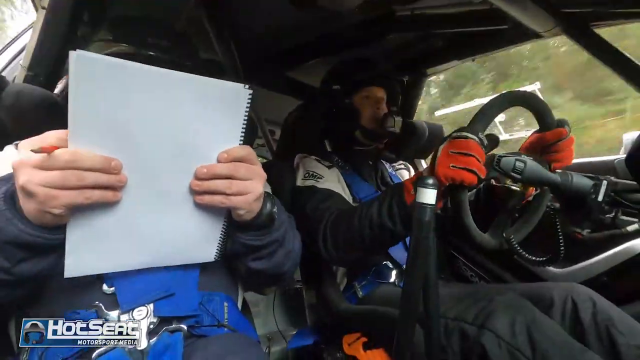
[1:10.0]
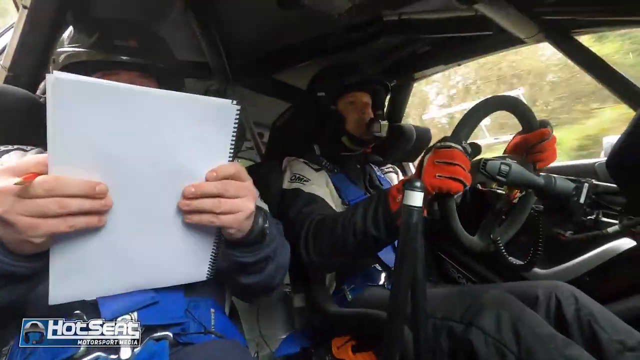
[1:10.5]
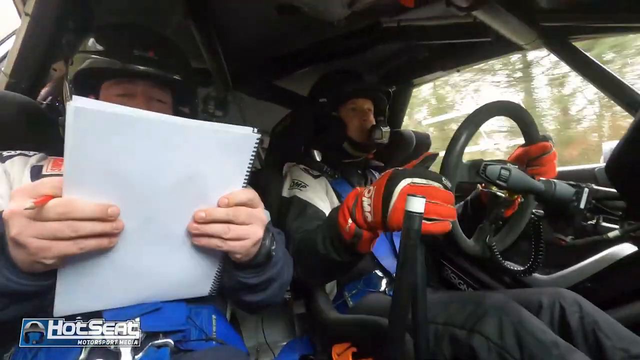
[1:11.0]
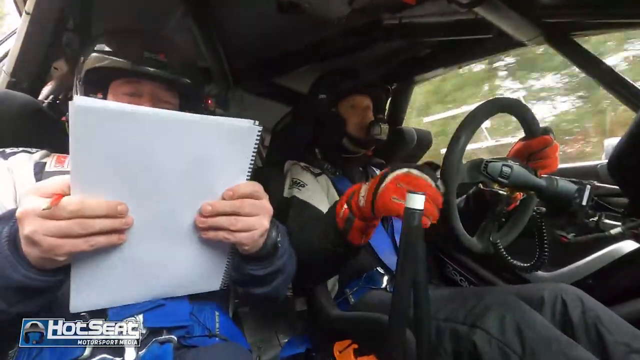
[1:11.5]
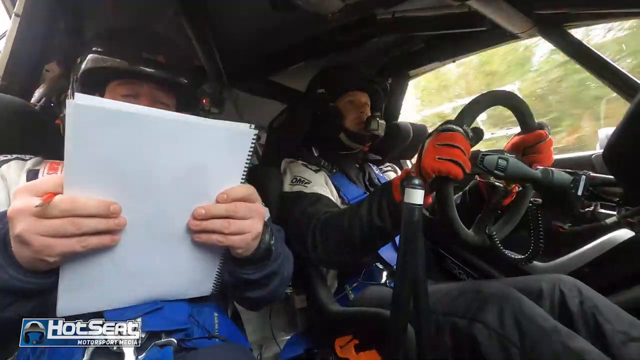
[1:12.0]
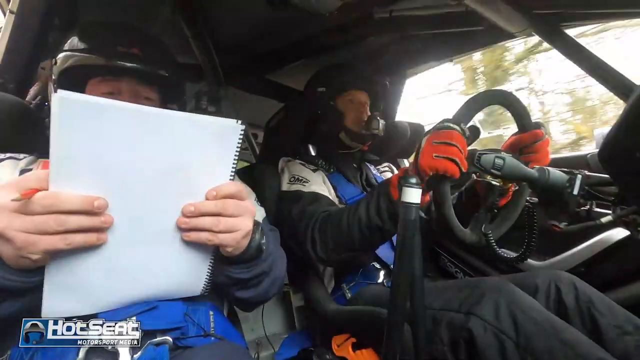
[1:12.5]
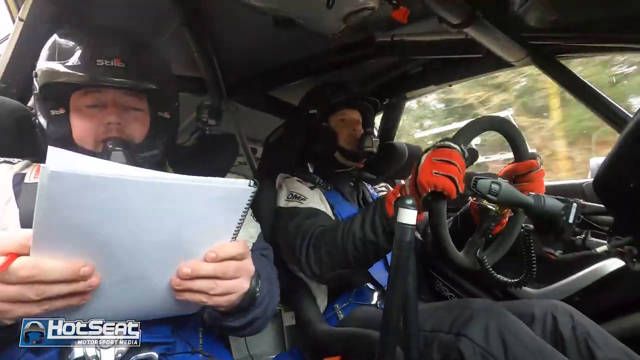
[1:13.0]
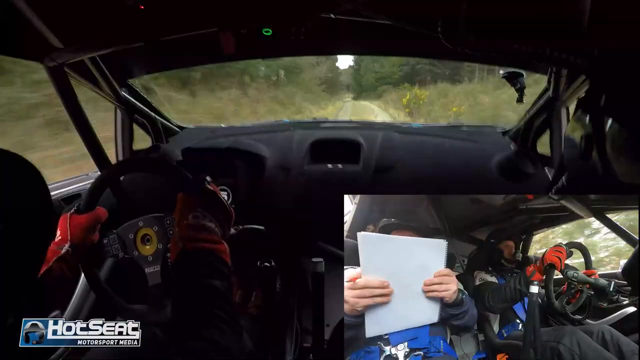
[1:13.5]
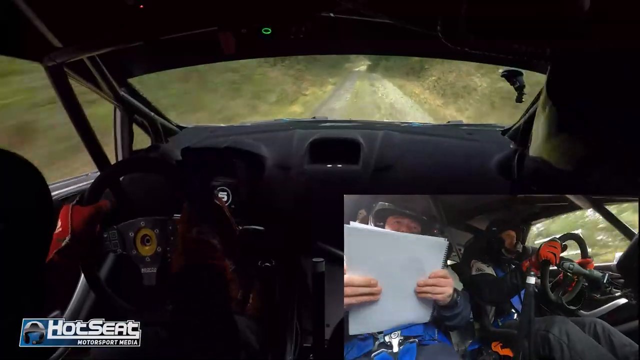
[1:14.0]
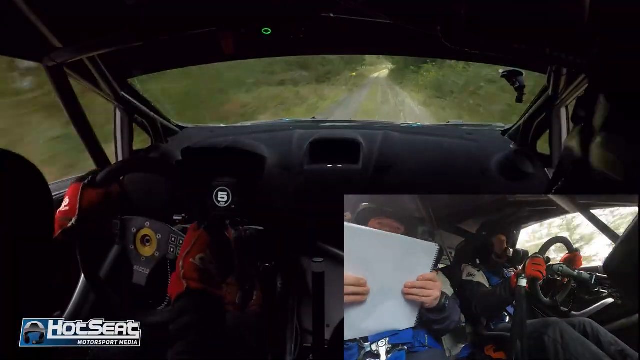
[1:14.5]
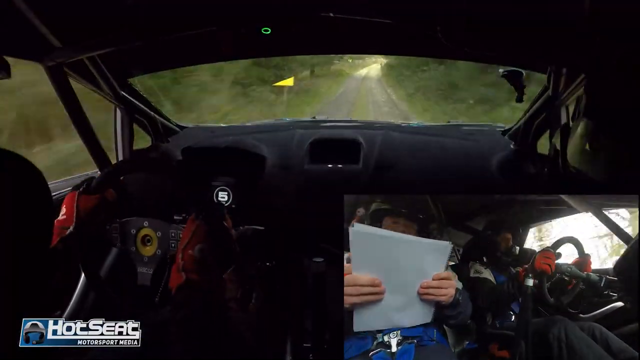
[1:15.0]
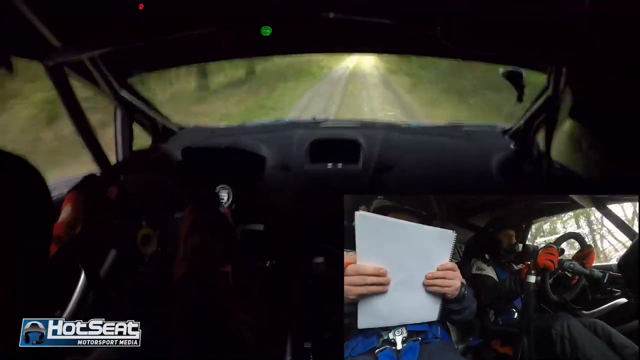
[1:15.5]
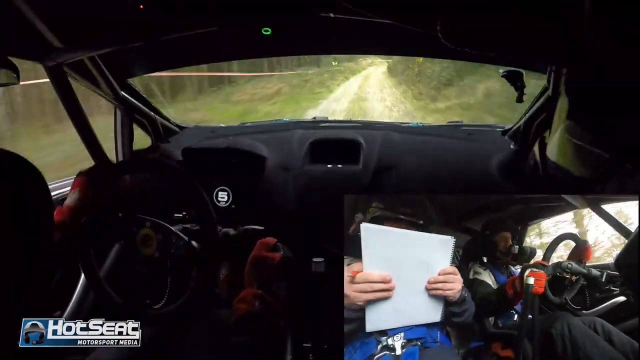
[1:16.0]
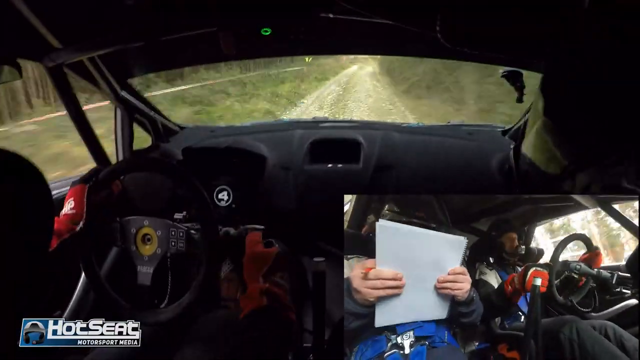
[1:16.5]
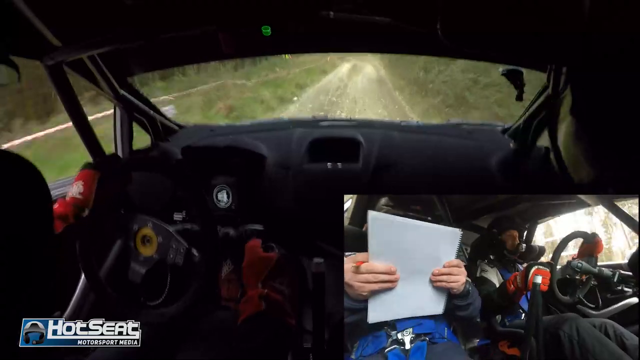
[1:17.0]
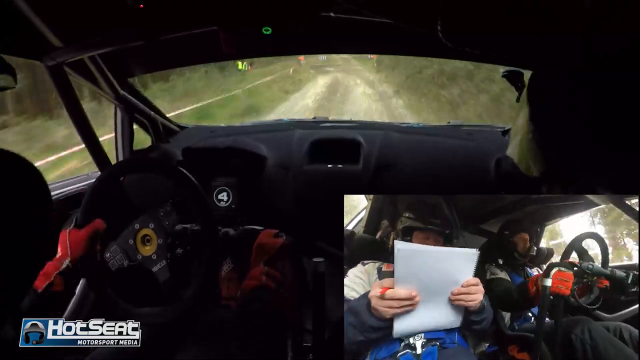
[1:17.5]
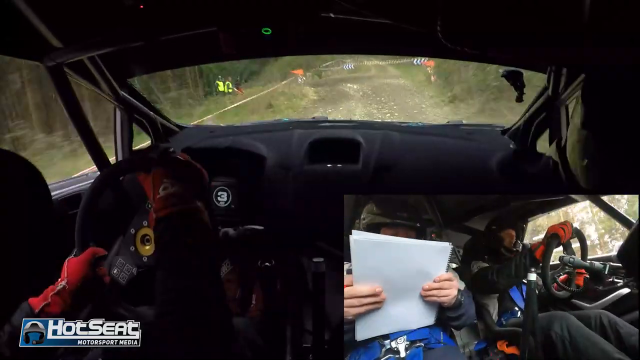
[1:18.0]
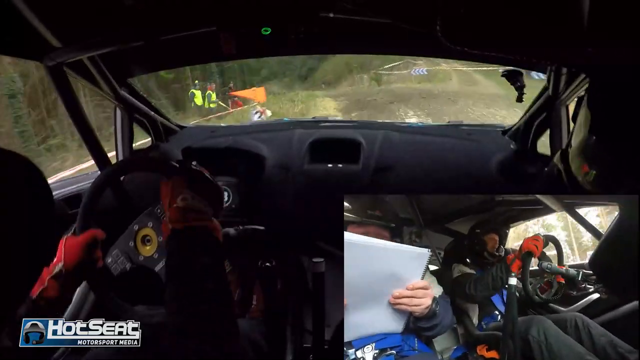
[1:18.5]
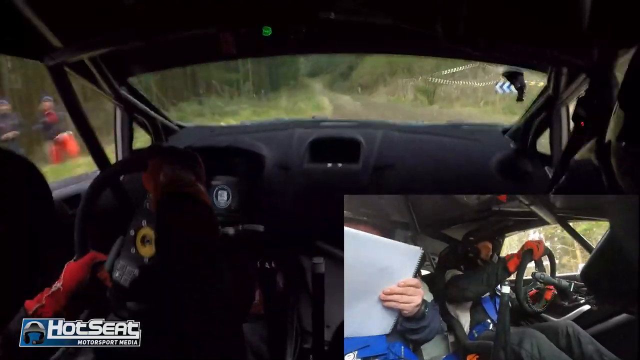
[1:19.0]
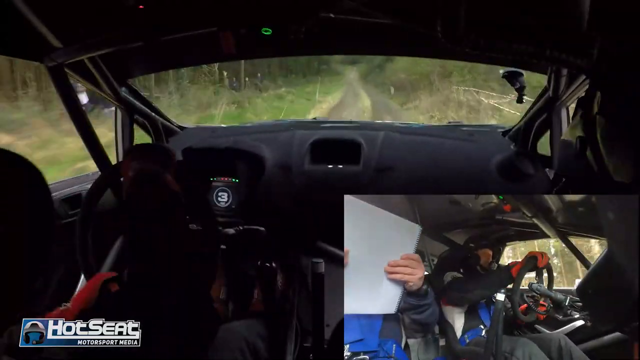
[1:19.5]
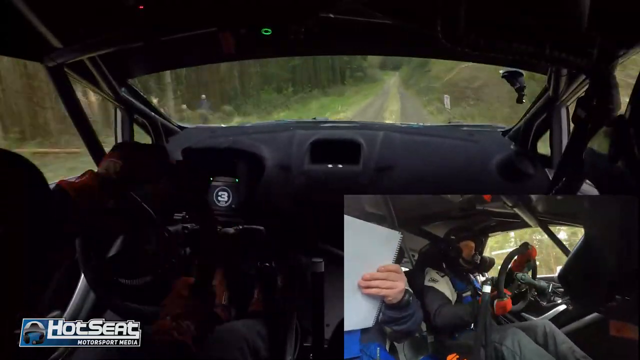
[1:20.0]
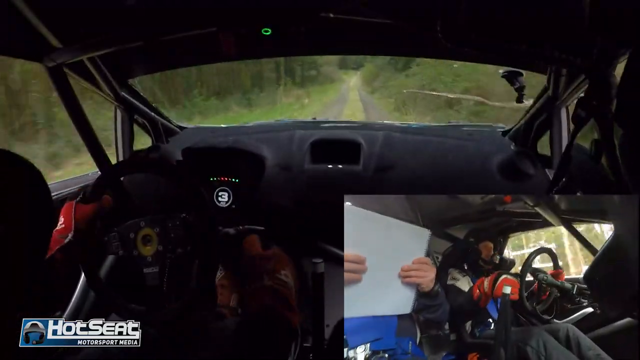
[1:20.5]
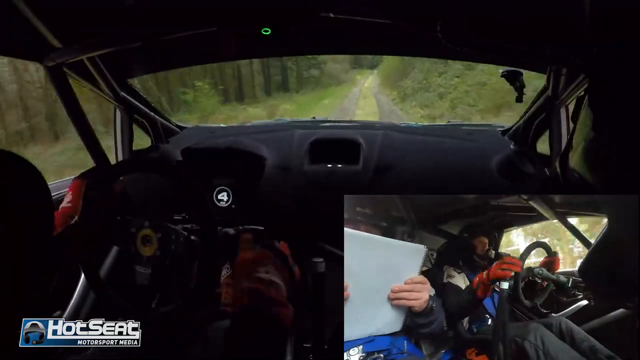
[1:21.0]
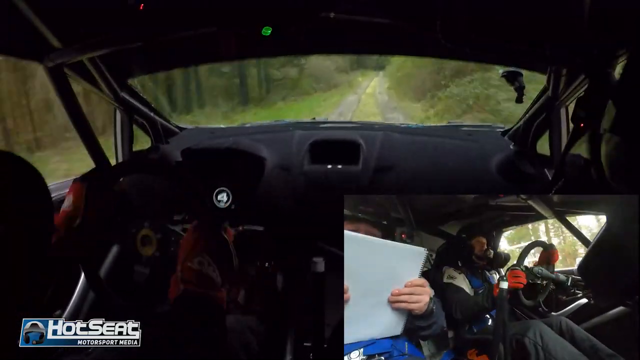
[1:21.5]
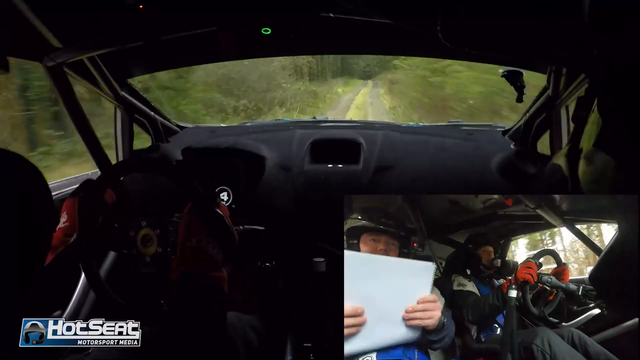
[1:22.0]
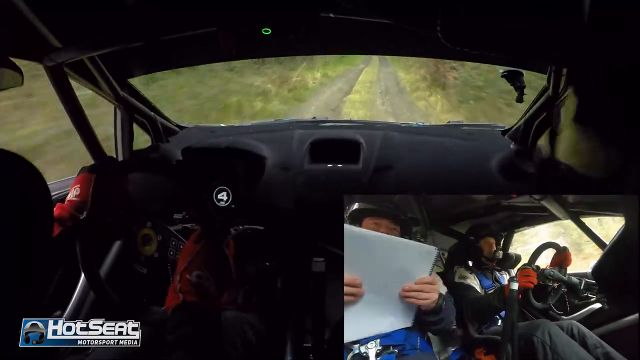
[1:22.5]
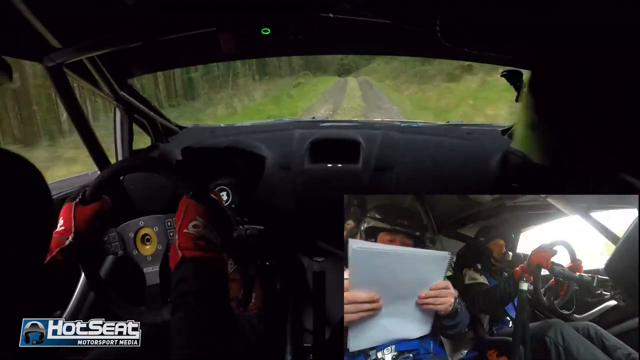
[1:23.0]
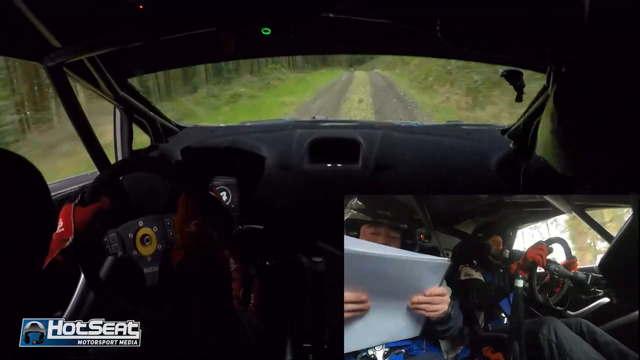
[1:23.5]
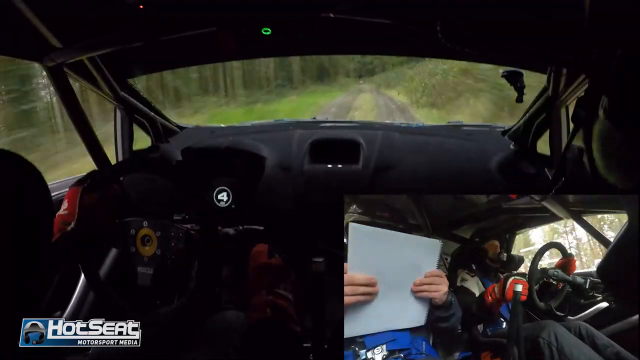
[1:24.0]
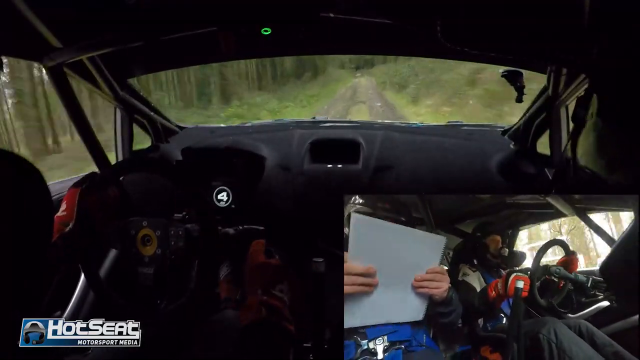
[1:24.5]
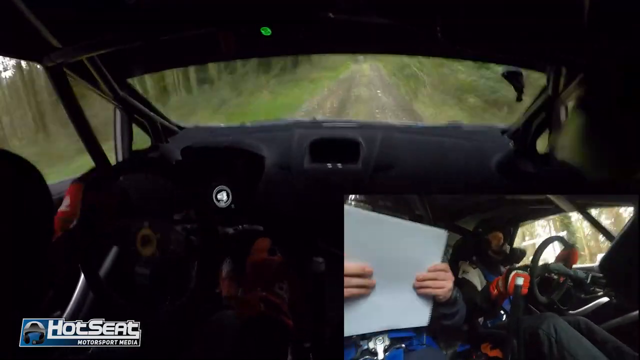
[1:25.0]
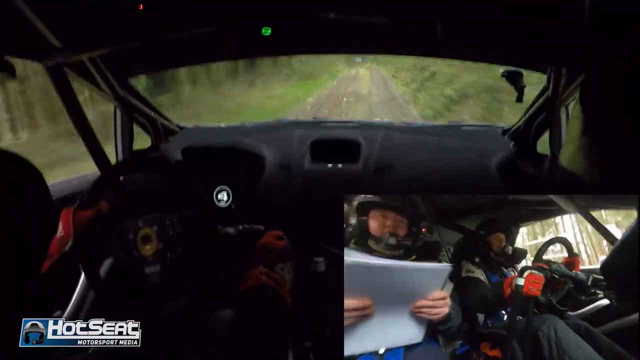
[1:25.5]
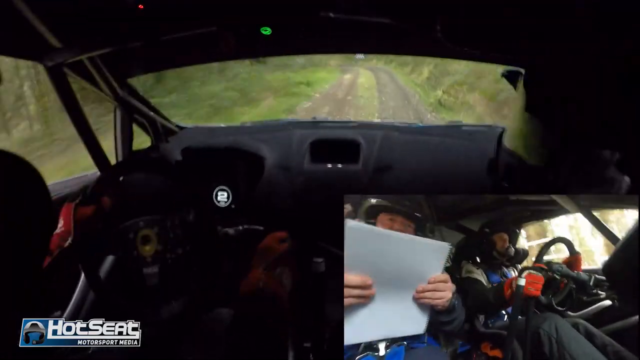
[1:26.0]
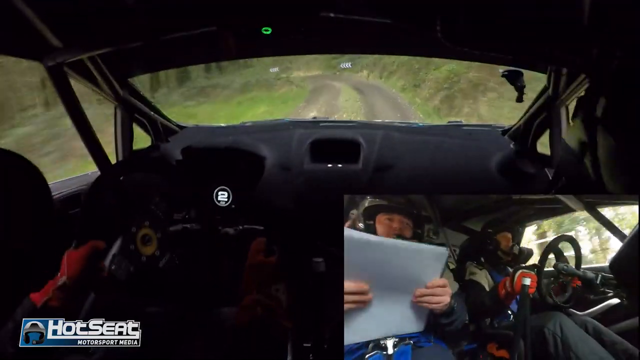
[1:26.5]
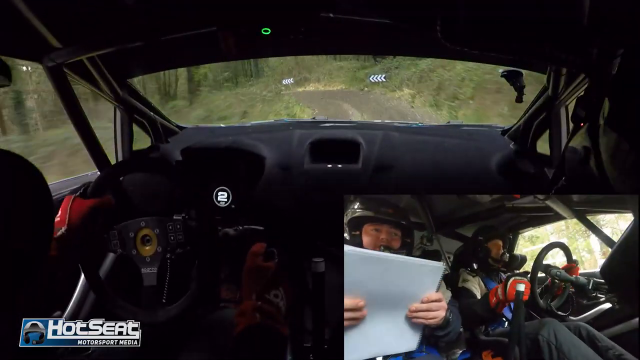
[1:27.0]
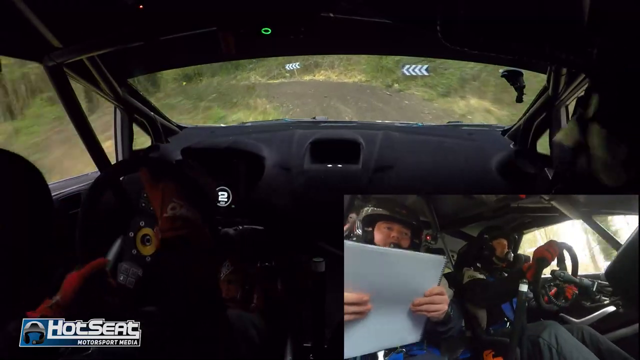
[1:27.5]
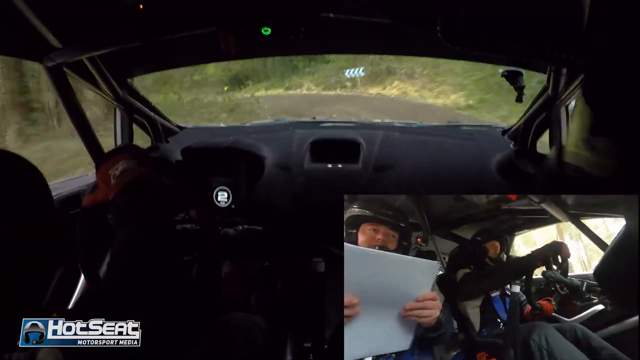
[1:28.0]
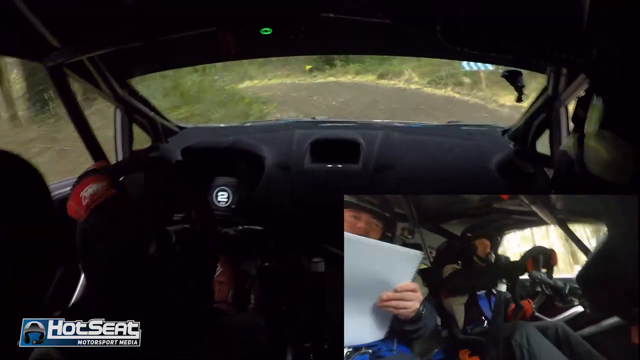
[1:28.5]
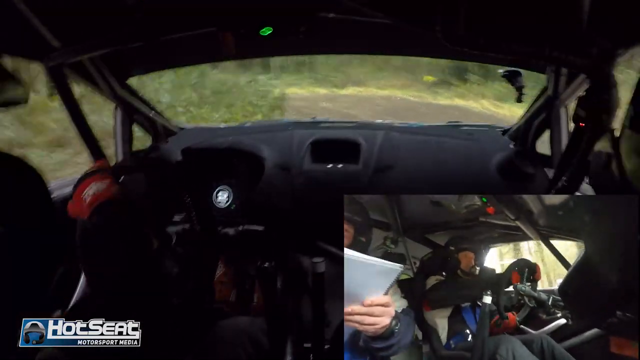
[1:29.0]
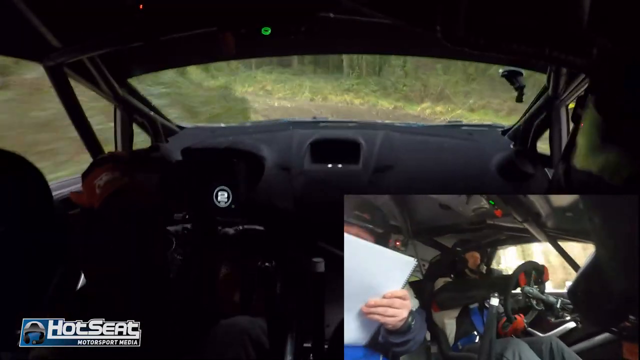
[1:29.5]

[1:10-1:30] Inside the car, the driver is using two different gear shifts: one is black with a white band around the top, and the other is apparently a couple of inches away from it. The dashboard is pretty much all black, with no sign of air conditioning. Nothing is visible in the spot in front of the driver where a normal car would show fuel and speed, and in the center, where a radio would be, there are no lights. The men keep driving and pick up speed, and there are now people on the side of the road. The car bounces around a lot, since the road, though it looks well traveled, is unpaved, a natural road.